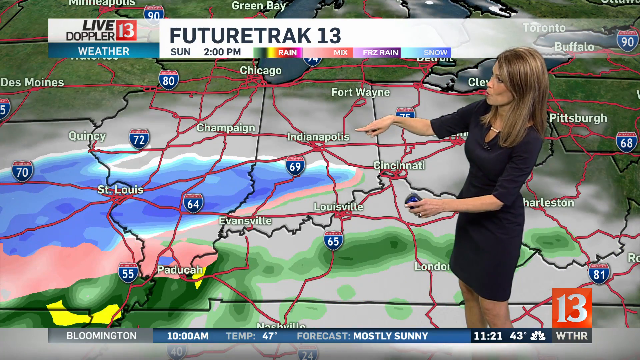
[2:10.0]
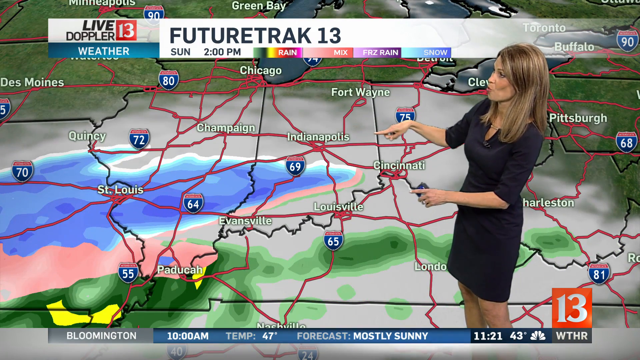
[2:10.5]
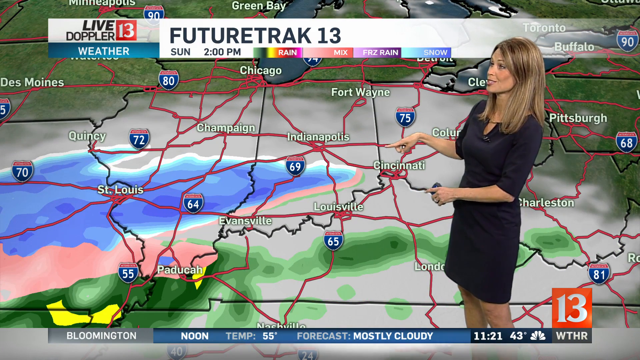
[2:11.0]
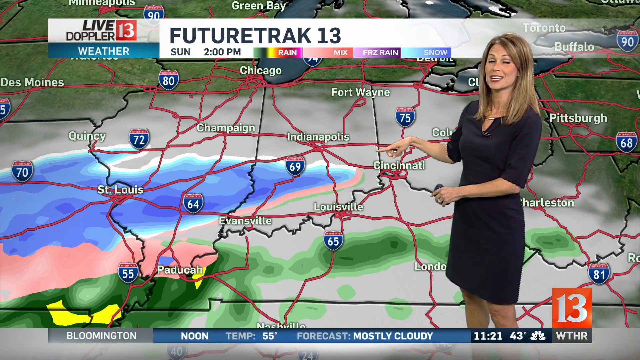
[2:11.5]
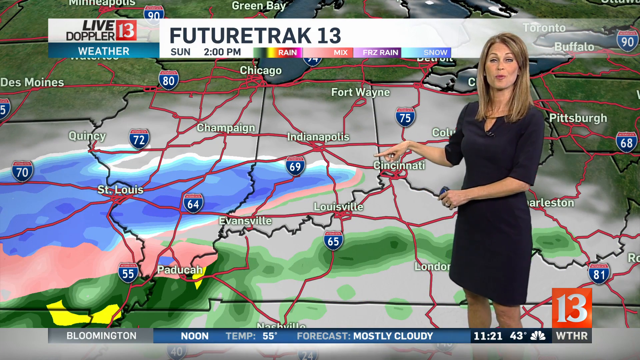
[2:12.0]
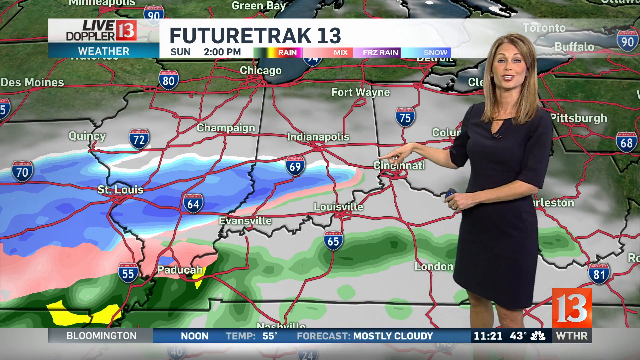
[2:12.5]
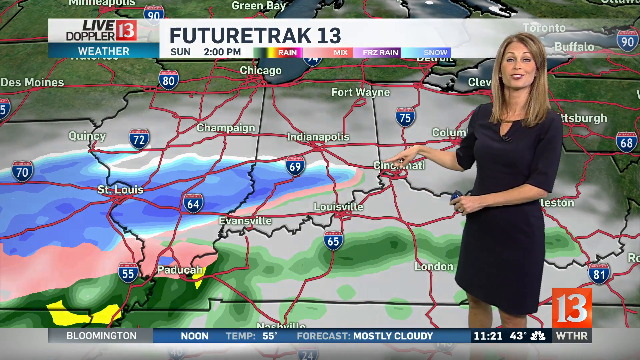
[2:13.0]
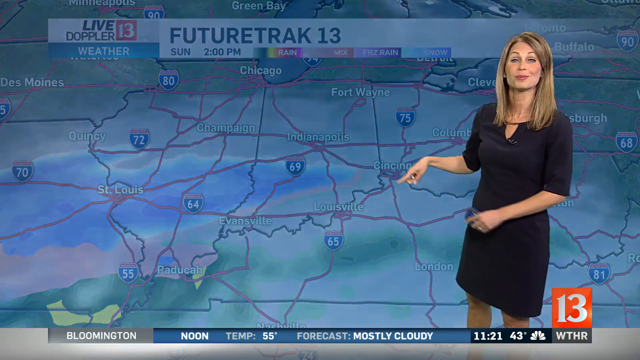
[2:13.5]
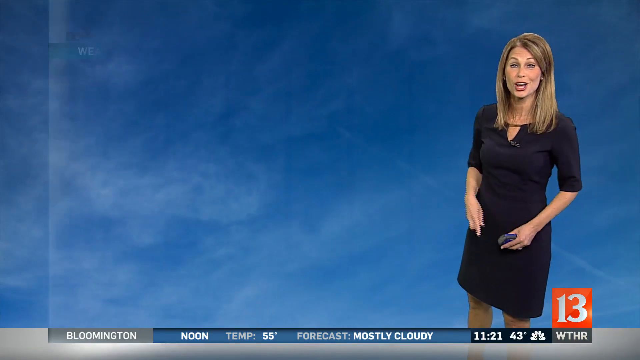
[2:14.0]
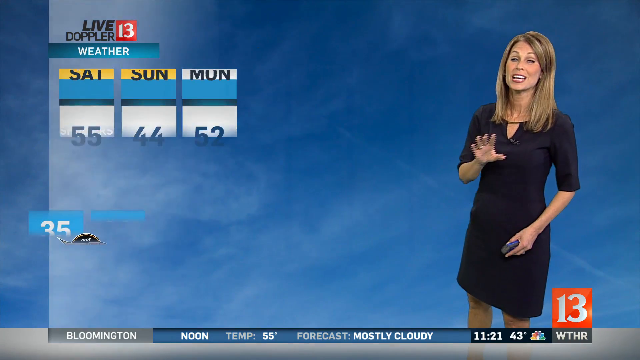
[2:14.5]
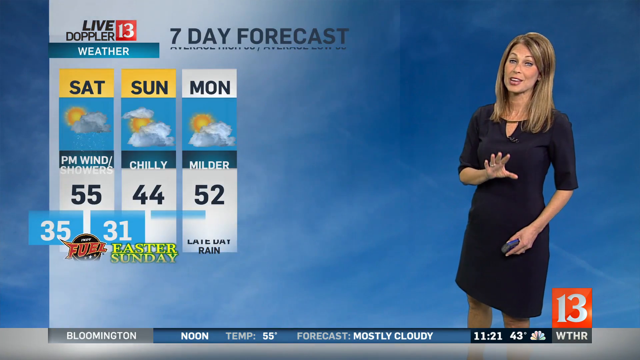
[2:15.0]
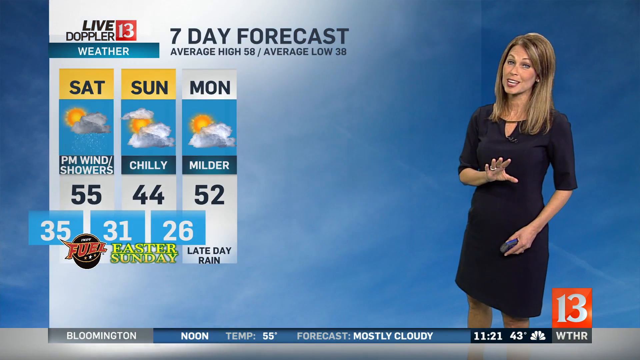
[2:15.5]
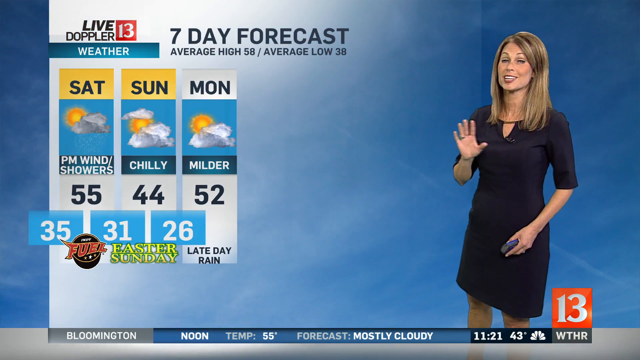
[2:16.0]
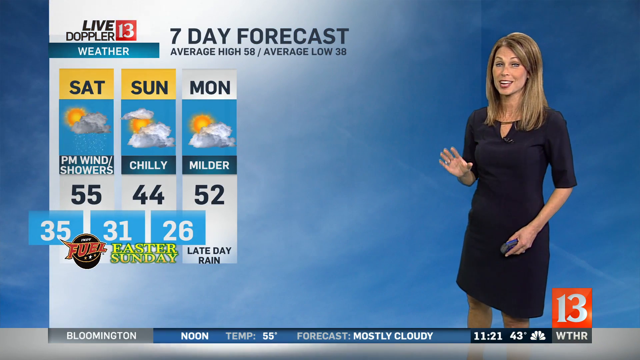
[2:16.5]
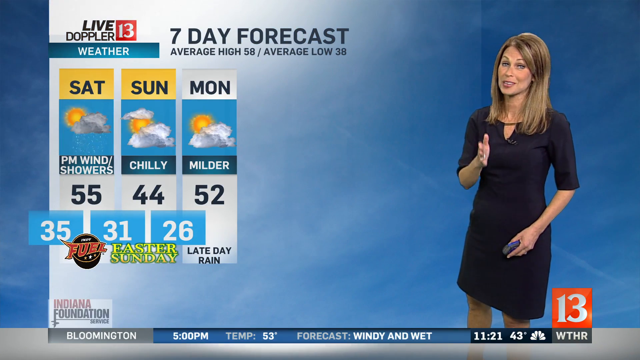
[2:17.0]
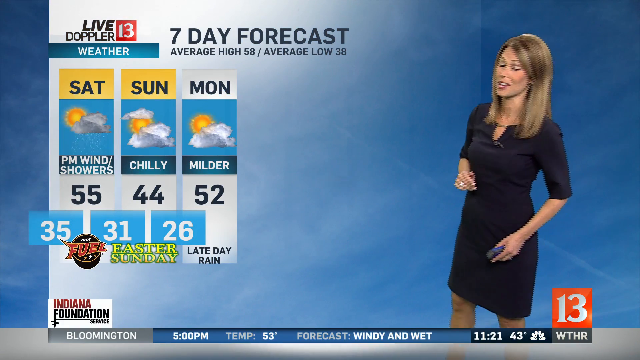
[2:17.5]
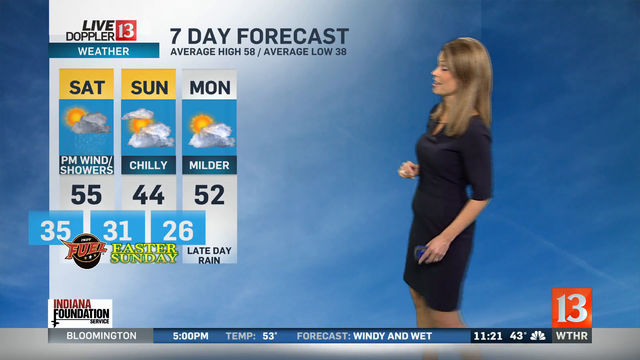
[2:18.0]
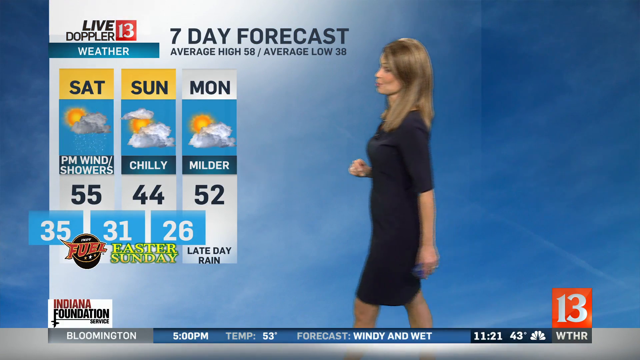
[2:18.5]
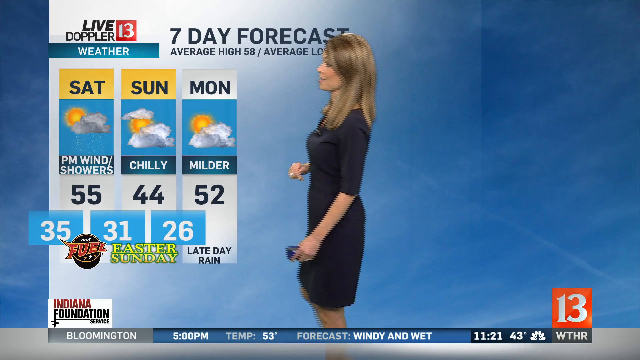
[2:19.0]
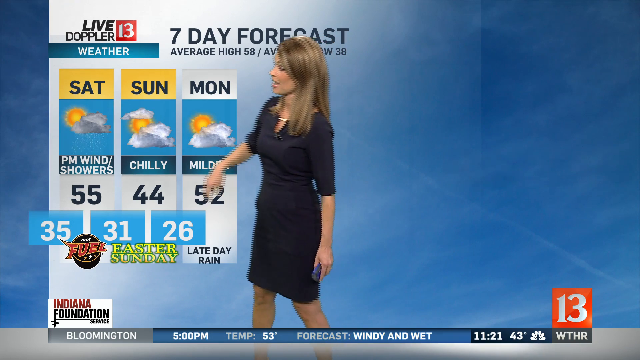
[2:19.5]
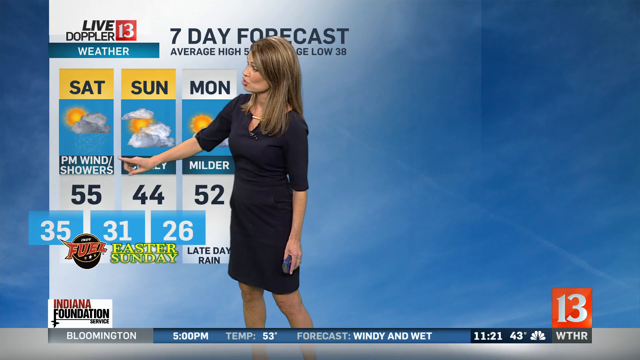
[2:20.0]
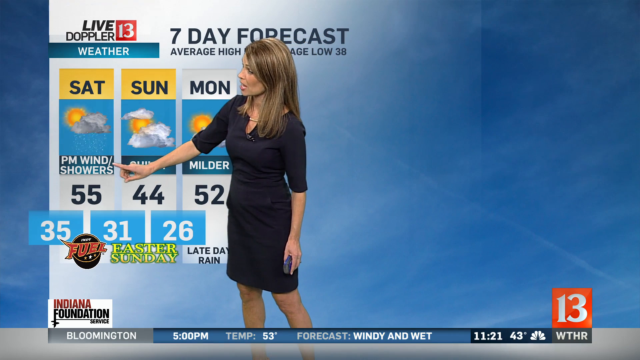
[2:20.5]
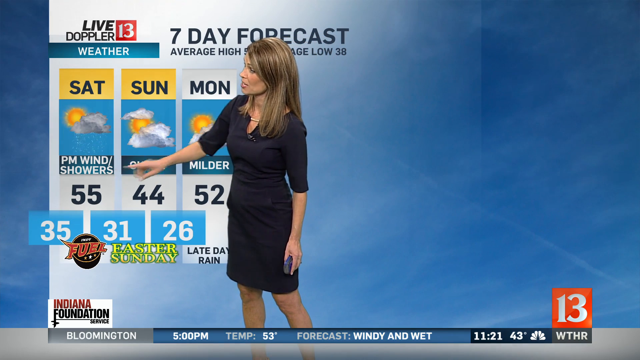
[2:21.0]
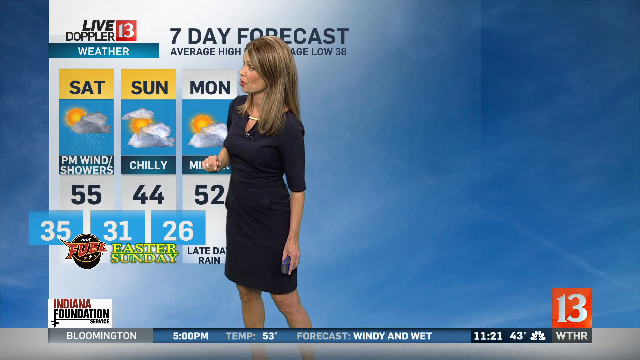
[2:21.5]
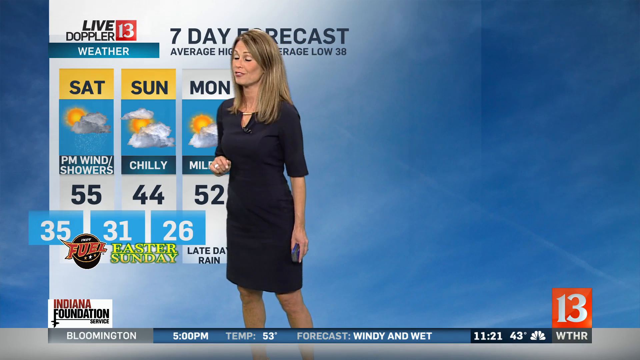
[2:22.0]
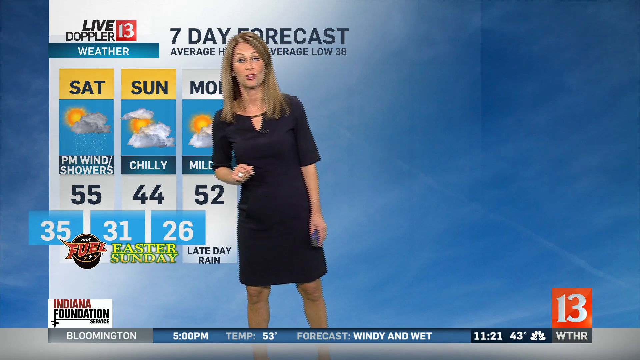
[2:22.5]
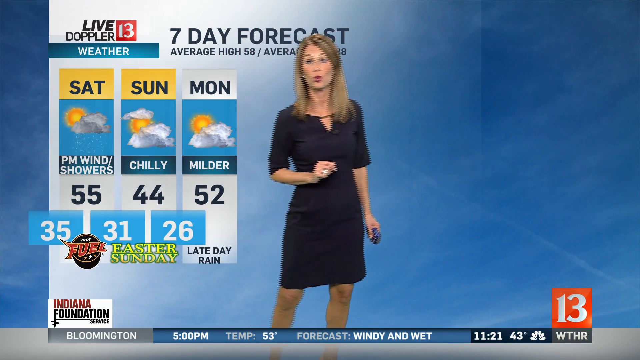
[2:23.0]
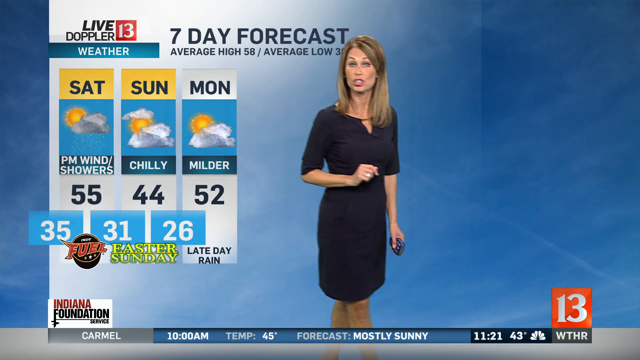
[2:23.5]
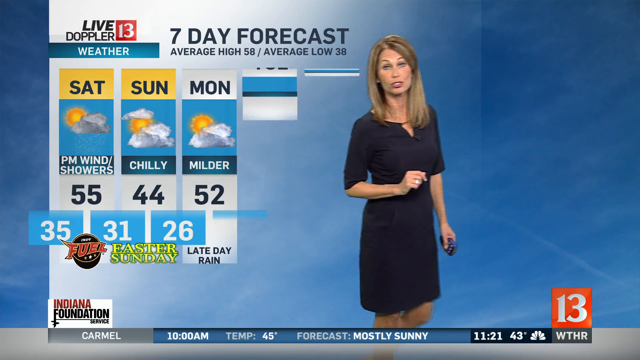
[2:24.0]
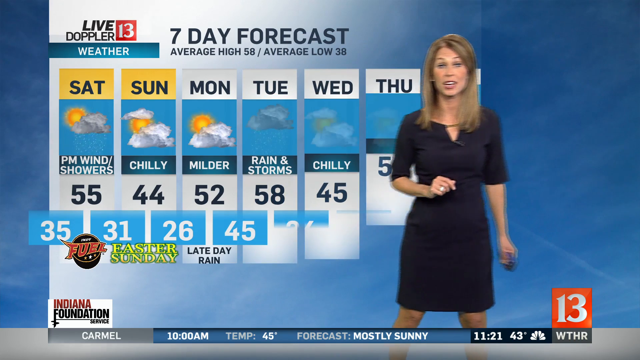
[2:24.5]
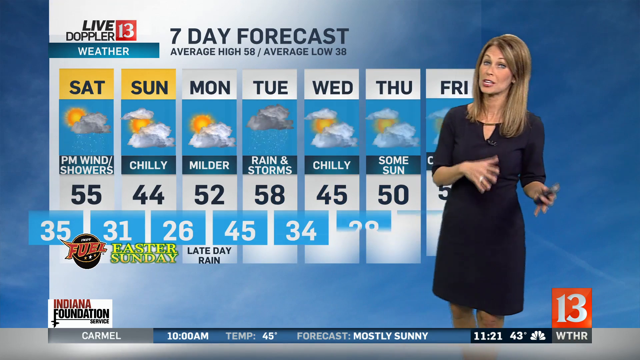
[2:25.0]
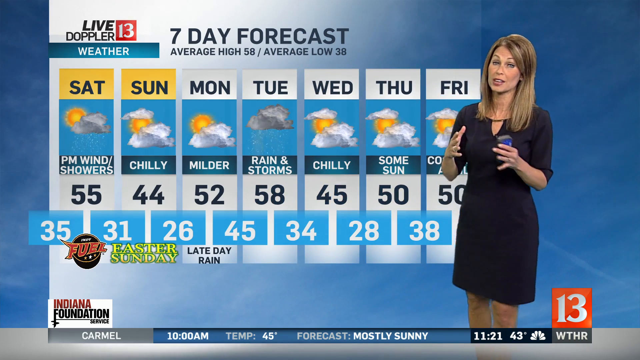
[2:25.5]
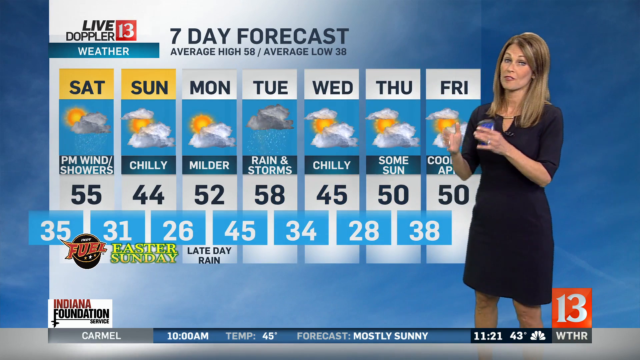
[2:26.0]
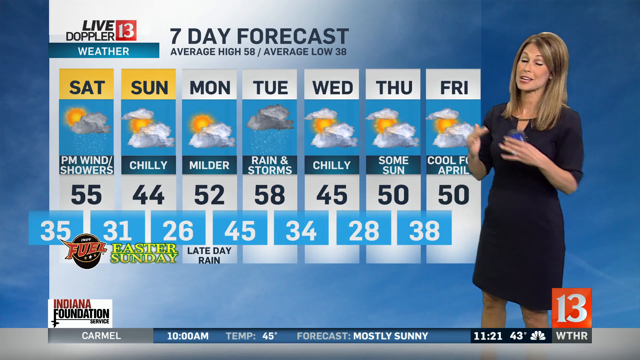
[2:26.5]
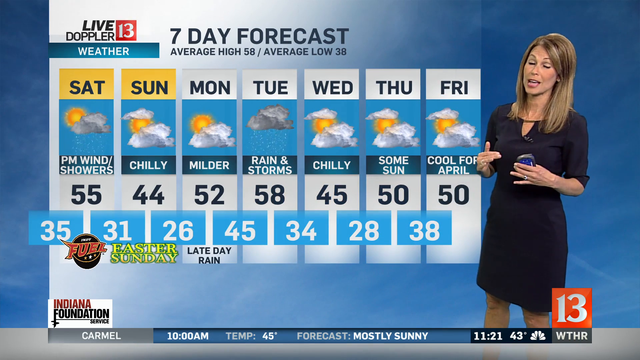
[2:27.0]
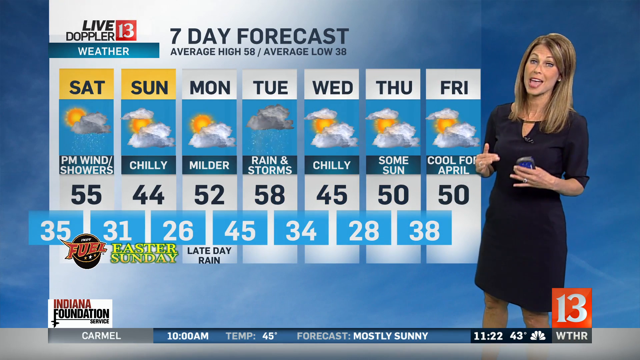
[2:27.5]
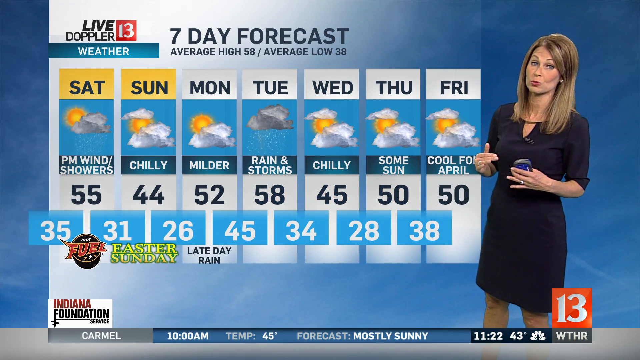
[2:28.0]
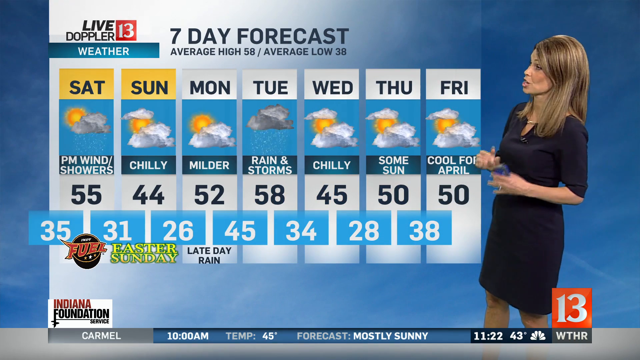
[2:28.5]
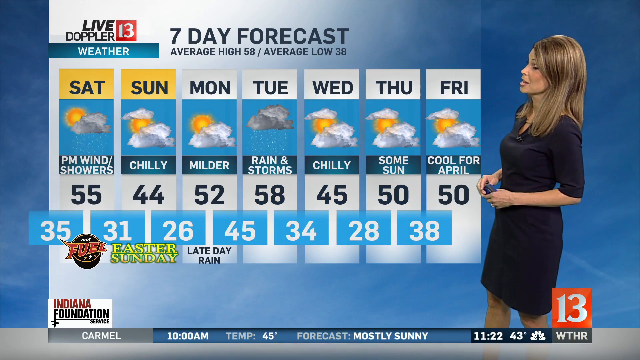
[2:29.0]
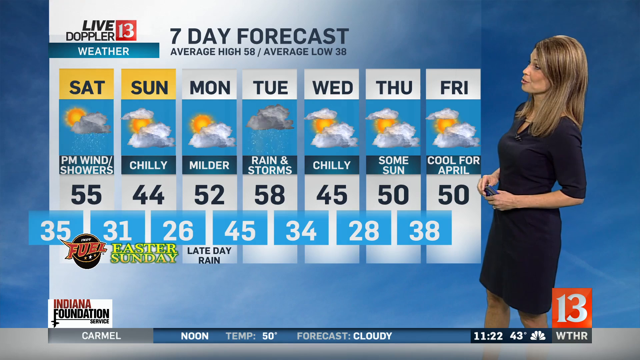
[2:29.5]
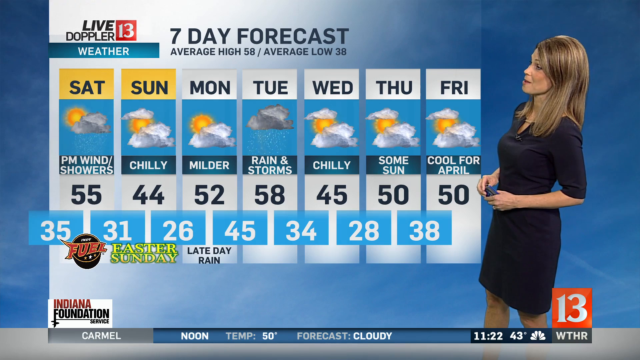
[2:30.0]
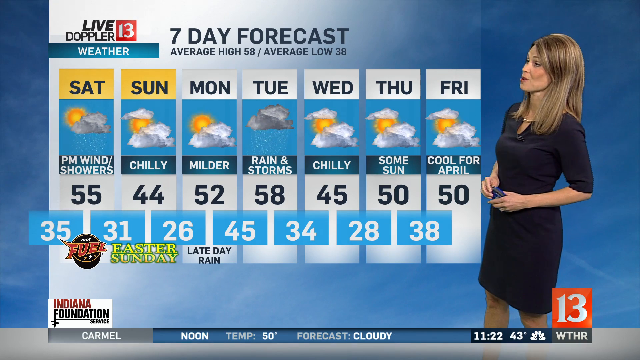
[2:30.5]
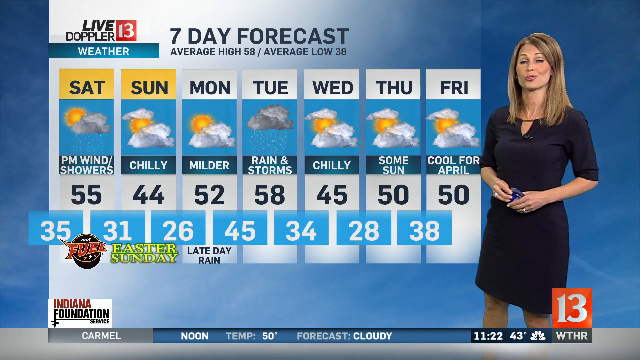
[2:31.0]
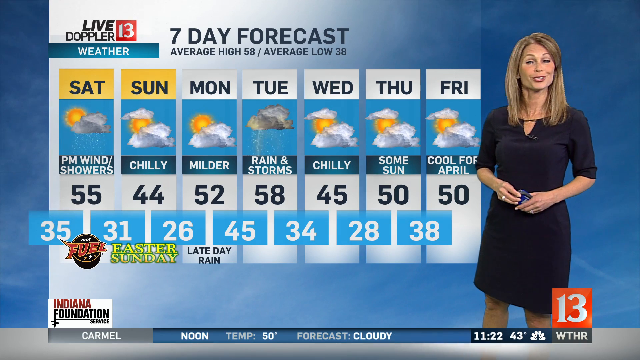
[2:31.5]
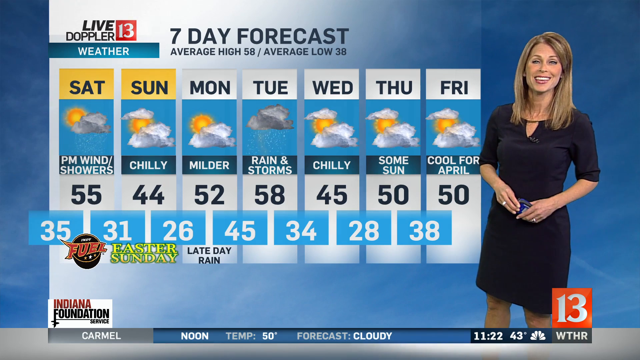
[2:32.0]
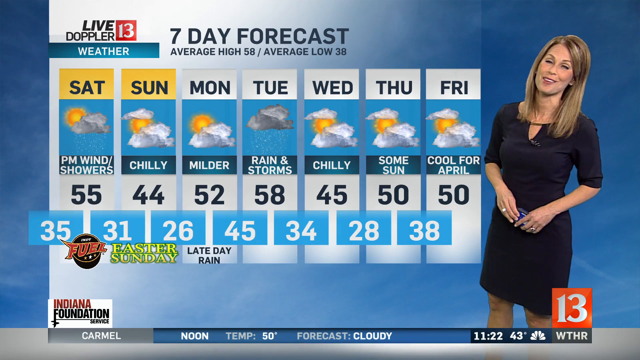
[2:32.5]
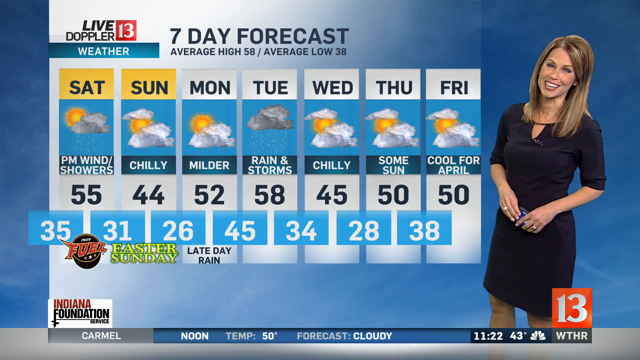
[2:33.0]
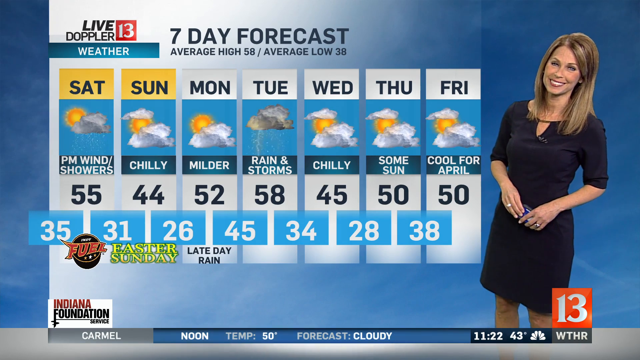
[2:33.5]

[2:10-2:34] A "futuretrak 13" map for Sunday 2 p.m. has many colours on the screen: light blue, a bit of dark blue, a little white, what looks like pink, then green and yellow. The news reporter, wearing a black dress and with short brown hair, points at Indianapolis. A few numbers appear, apparently temperatures for some of the areas, and areas such as Chicago, Champaign and St. Louis are shown. The weather reporter continues talking with a smile on her face. Then a seven day forecast screen shows average high 58 and average low 38: Saturday wind or showers at 55, Sunday chilly at 44, Monday milder at 52, and for Easter Sunday late day rain. The news reporter points at Saturday's wind or showers, and then more days of the week, from Tuesday to Friday, are shown.